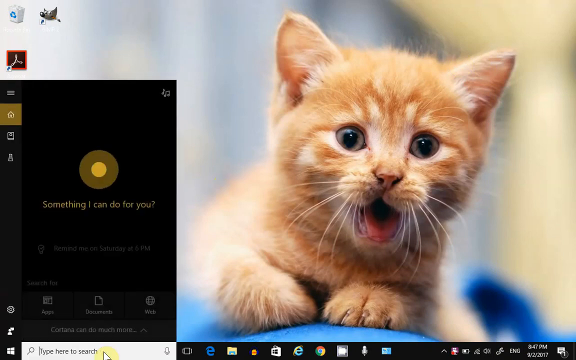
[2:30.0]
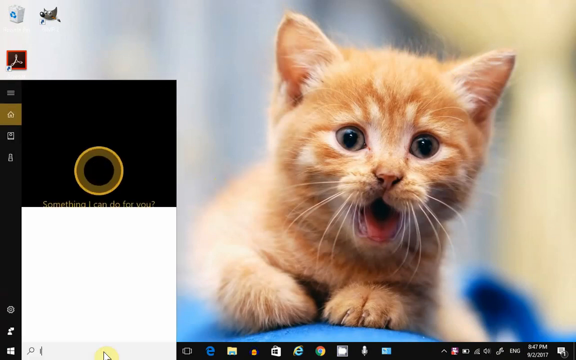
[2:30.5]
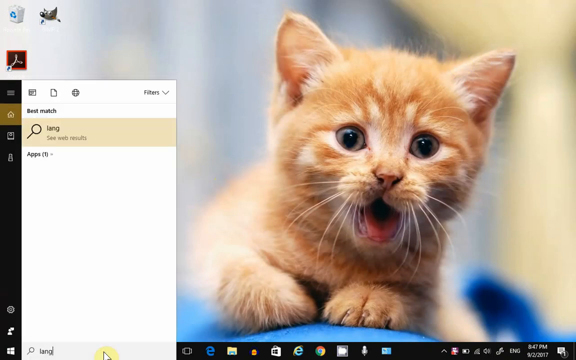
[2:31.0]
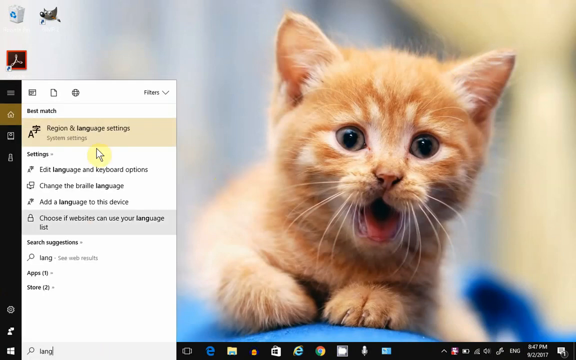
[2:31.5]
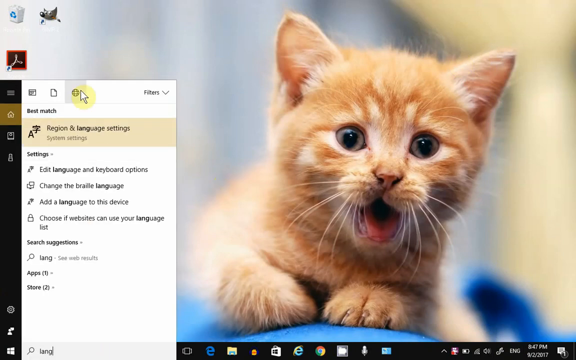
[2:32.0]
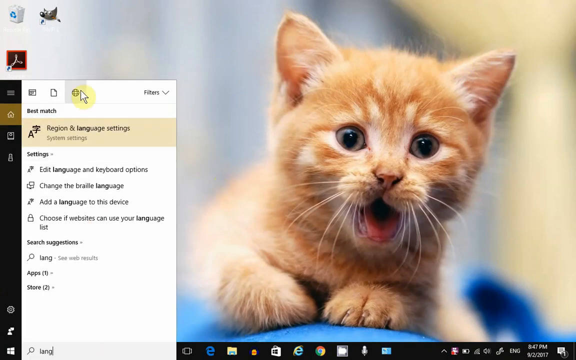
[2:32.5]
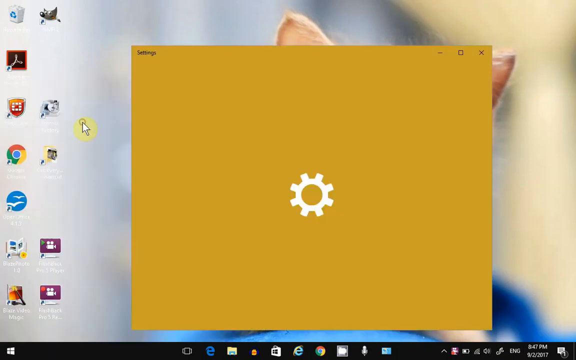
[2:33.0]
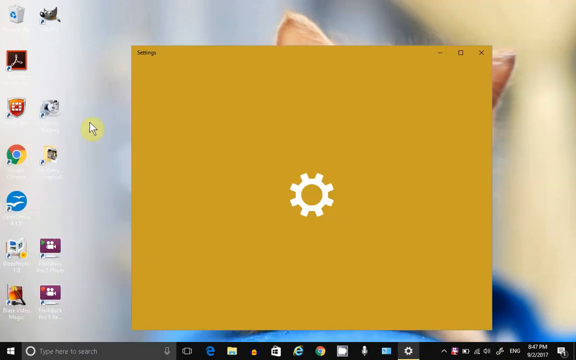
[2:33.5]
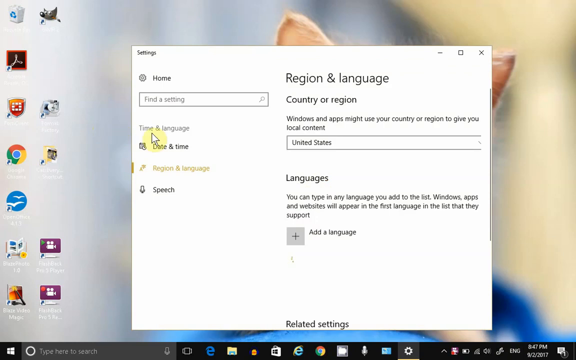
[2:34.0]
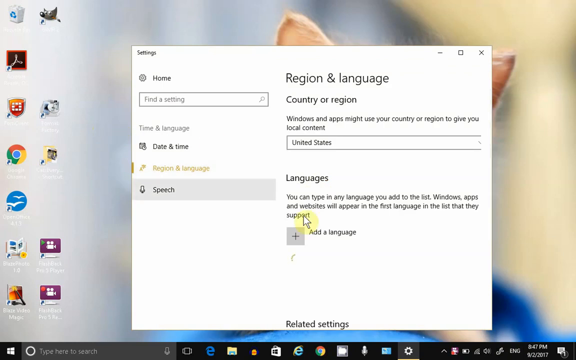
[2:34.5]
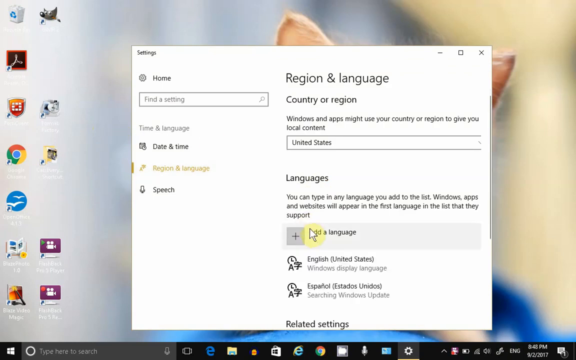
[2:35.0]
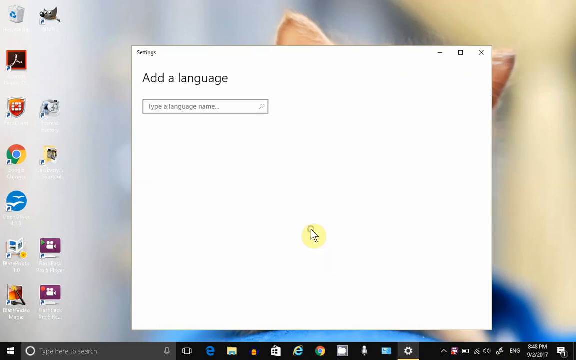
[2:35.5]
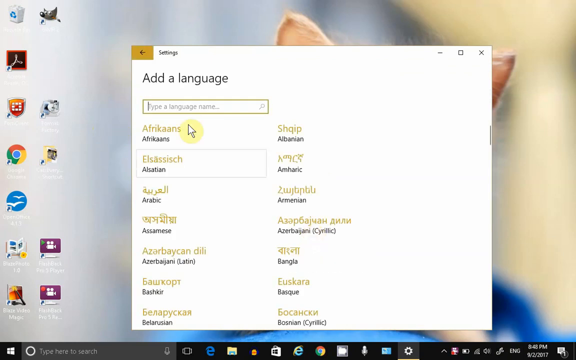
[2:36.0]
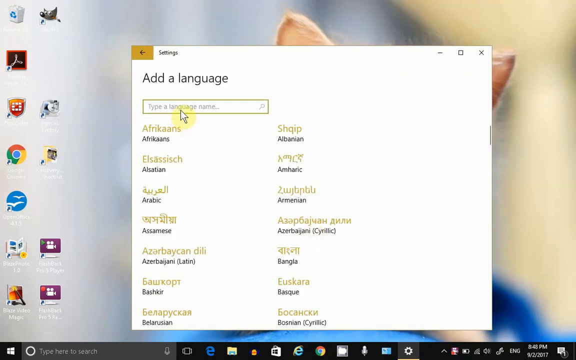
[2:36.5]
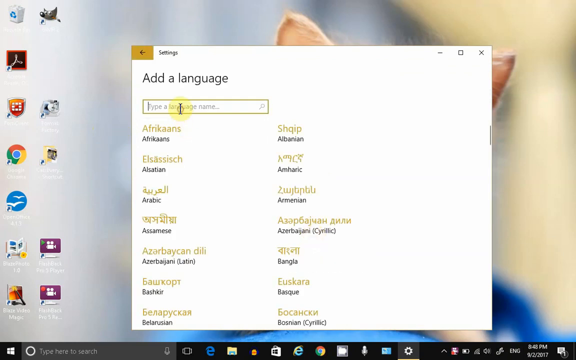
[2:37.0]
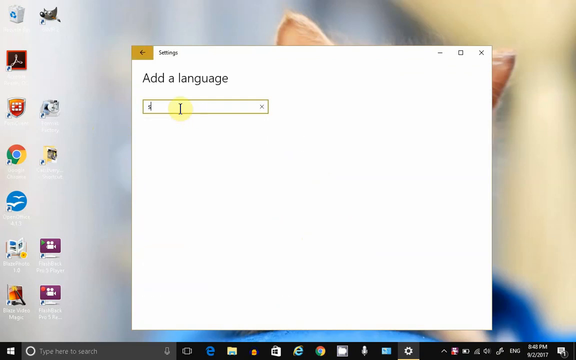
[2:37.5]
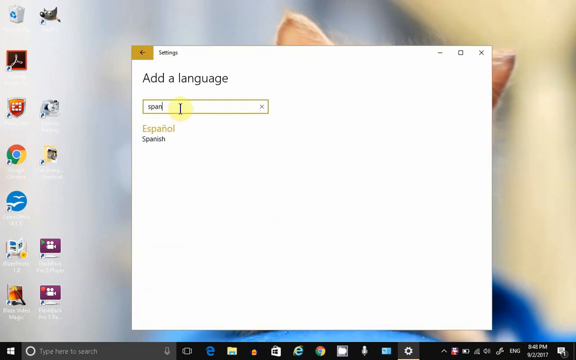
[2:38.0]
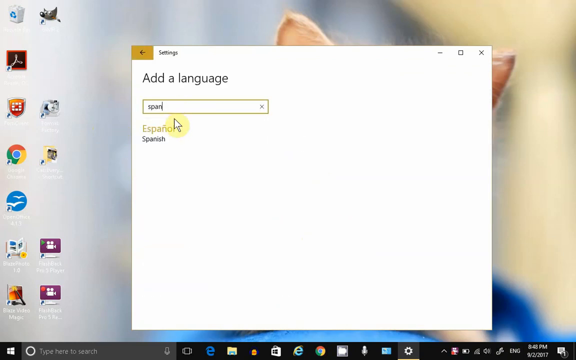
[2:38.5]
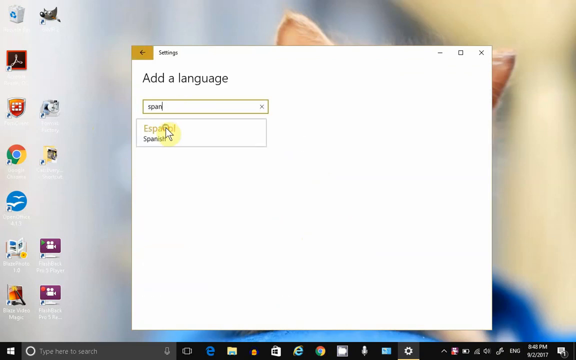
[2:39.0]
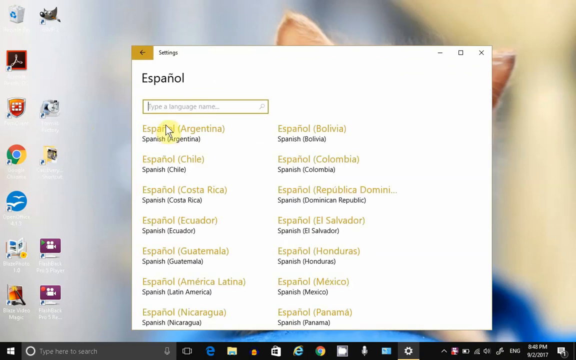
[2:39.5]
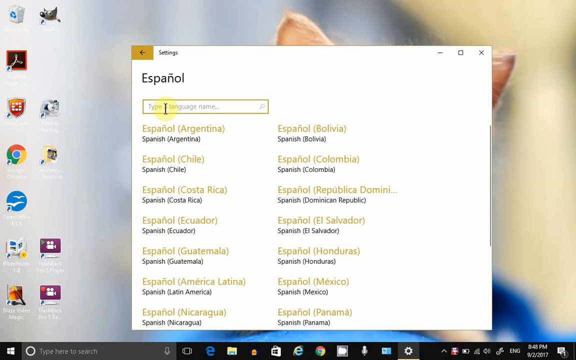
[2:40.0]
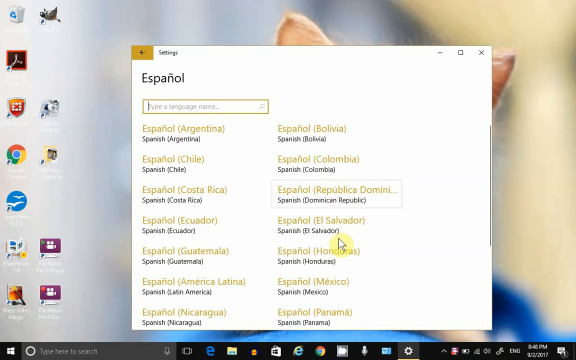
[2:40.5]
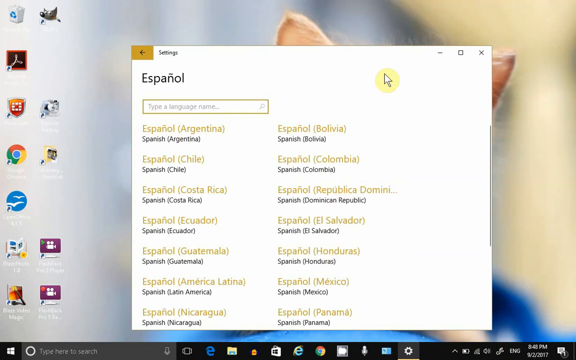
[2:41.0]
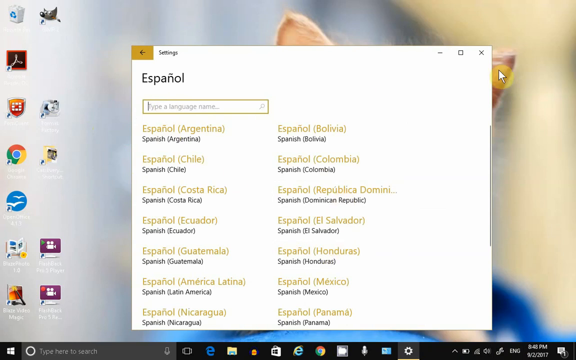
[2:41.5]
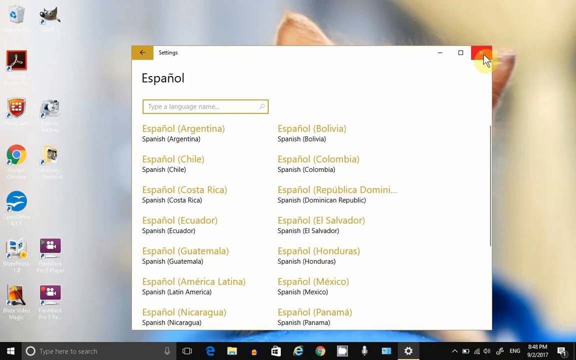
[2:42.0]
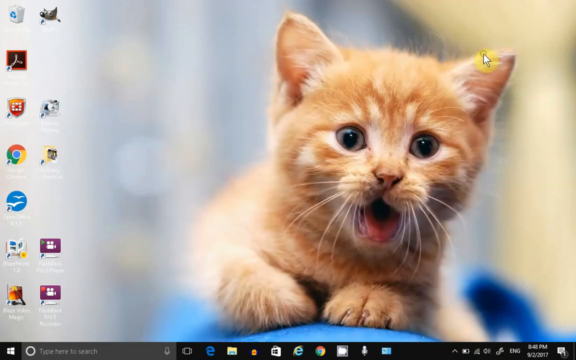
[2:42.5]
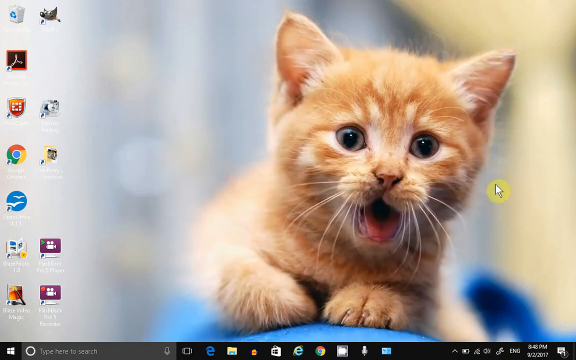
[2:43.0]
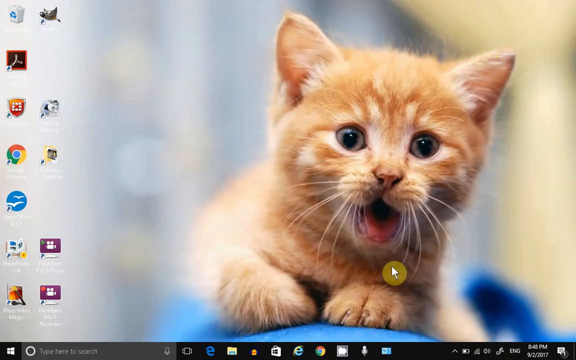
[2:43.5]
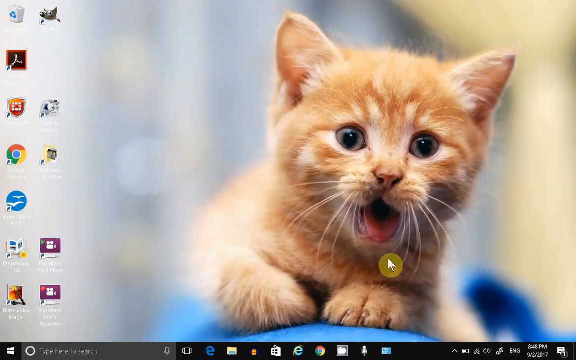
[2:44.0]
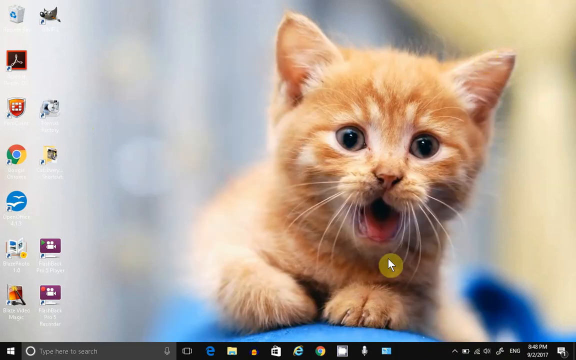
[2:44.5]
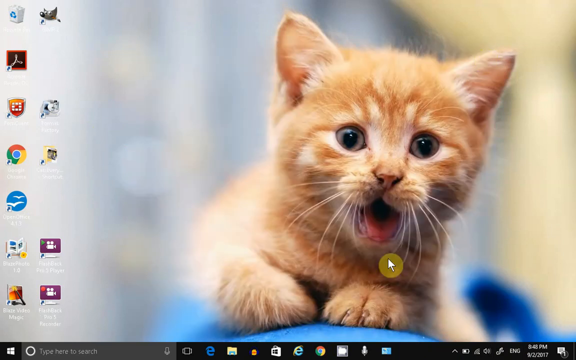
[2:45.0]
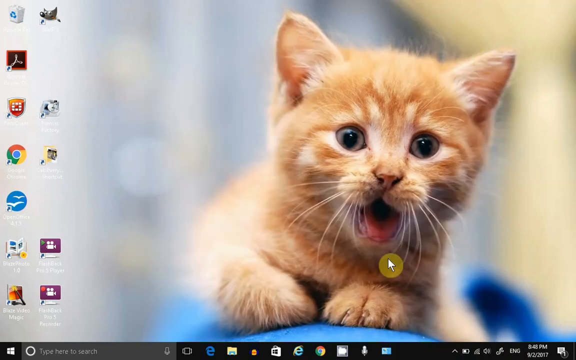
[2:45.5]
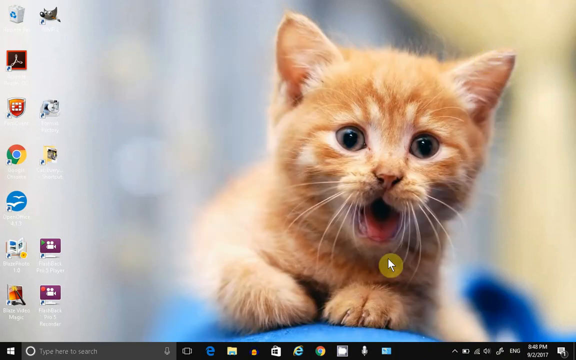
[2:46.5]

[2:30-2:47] A screensaver shows a cat leaning on something, with its front paws visible and its mouth open as if meowing. Its eyes are greenish and wide open. The cat is very young, apparently a kitten, with a little pink in its ears and an M on its forehead marking it as a tabby. A cursor constantly circles the screen, hitting pop-ups as they appear. The biggest pop-up, in the middle, is on settings for adding a language. They type, and it says "Espanol"; it looks like they change from English to Spanish. Icons are on the left-hand side of the computer screen. The screen returns to the screensaver, with the cursor by the cat's mouth, surrounded by a yellowish color.